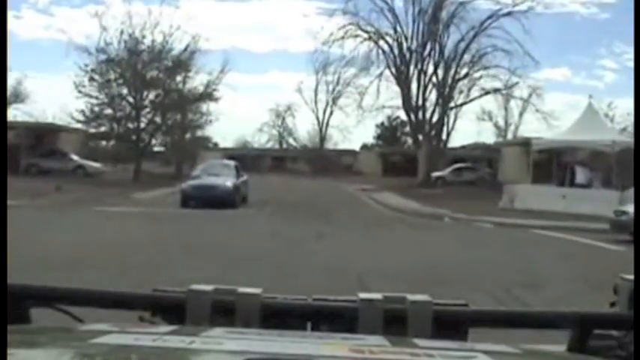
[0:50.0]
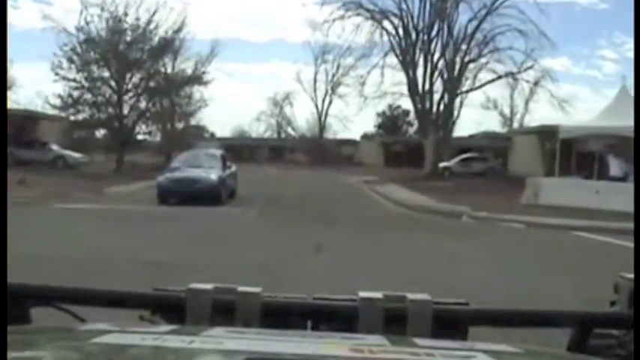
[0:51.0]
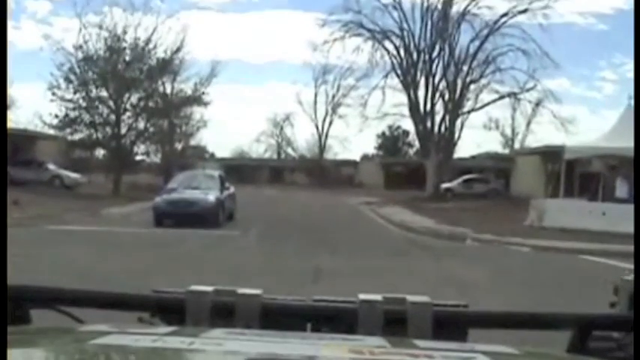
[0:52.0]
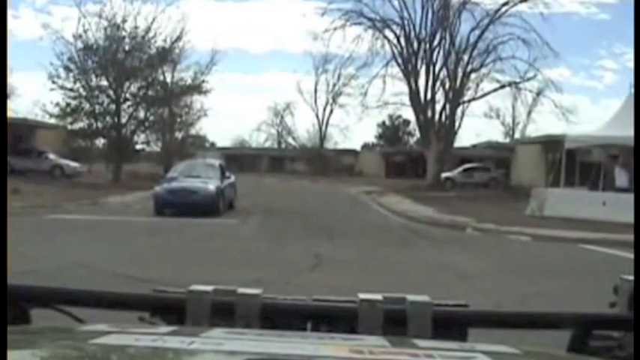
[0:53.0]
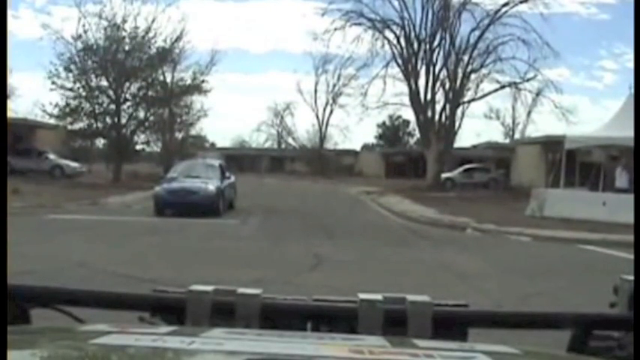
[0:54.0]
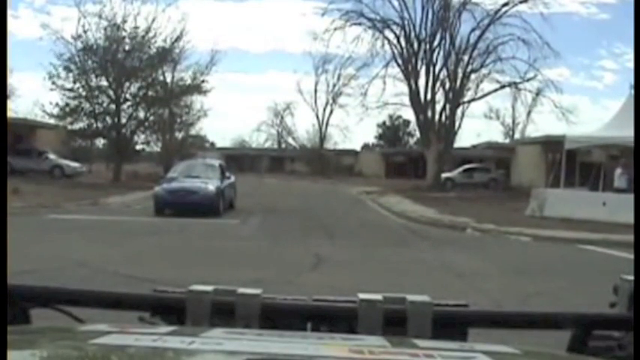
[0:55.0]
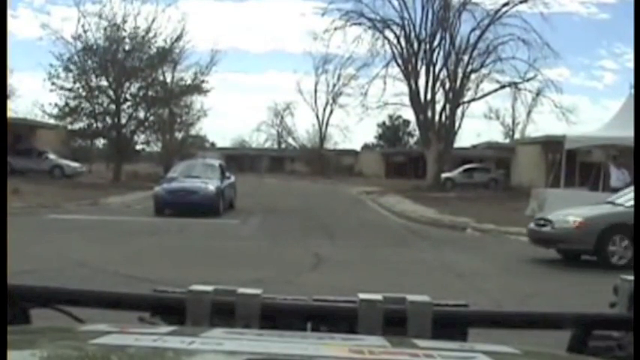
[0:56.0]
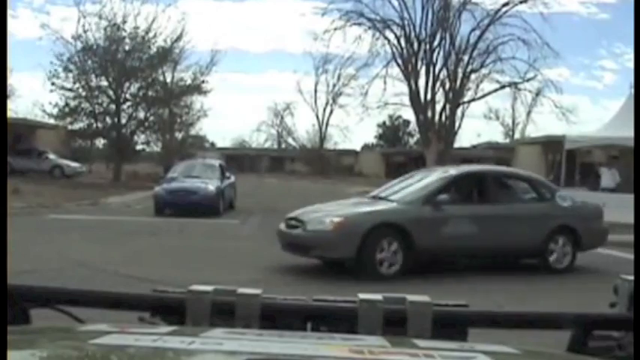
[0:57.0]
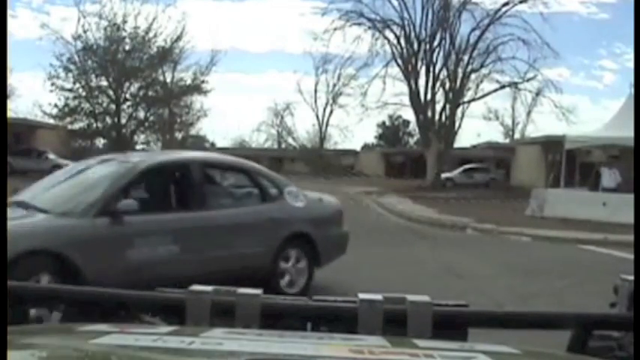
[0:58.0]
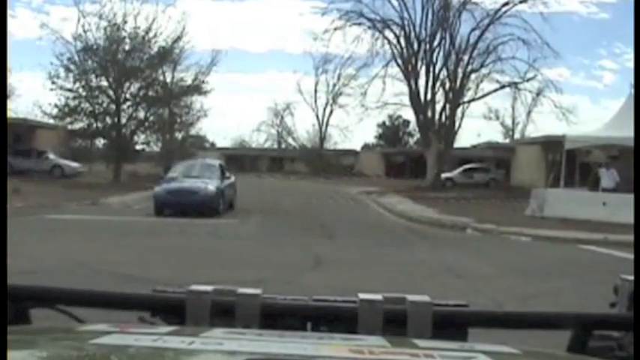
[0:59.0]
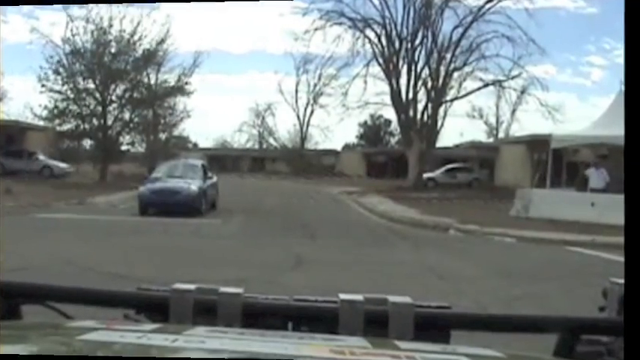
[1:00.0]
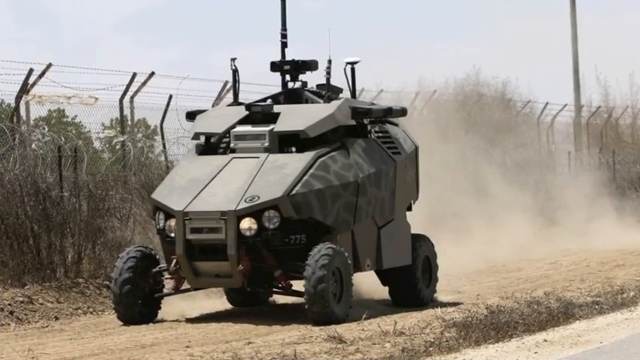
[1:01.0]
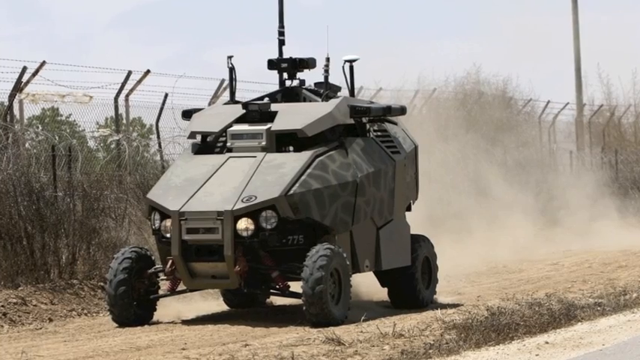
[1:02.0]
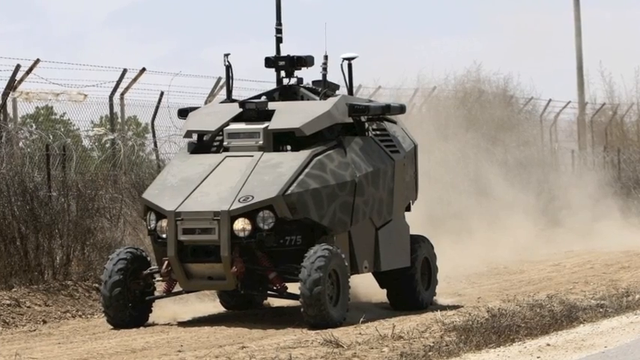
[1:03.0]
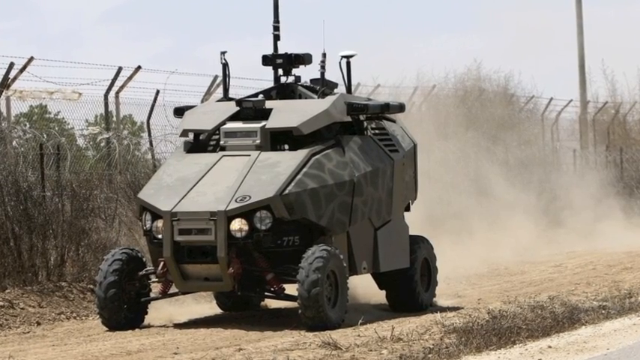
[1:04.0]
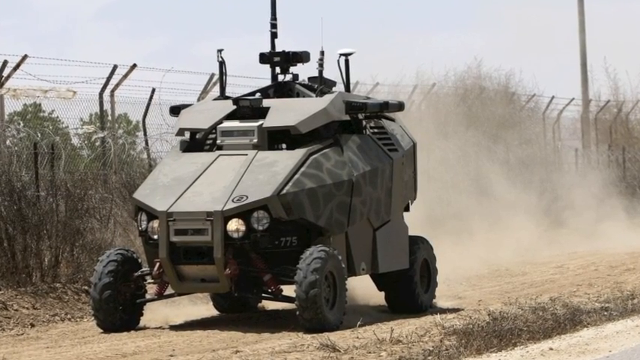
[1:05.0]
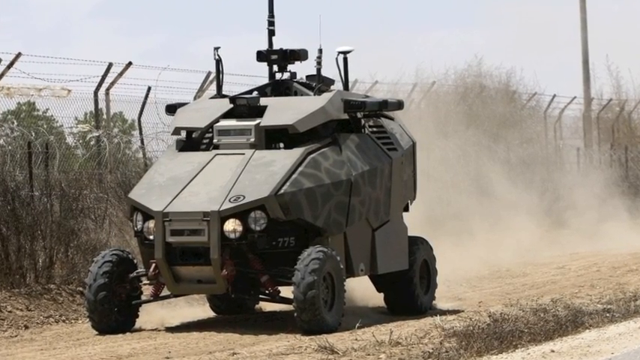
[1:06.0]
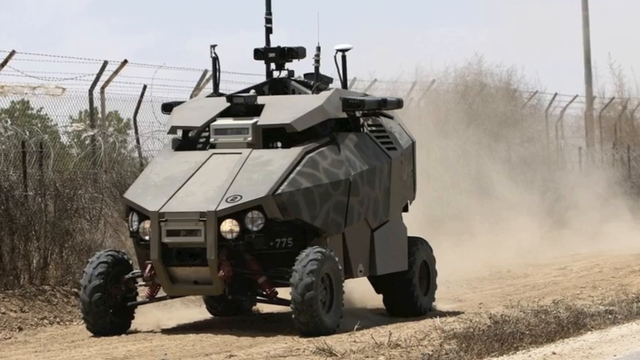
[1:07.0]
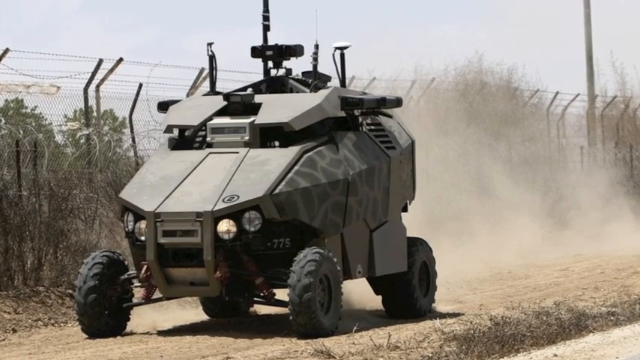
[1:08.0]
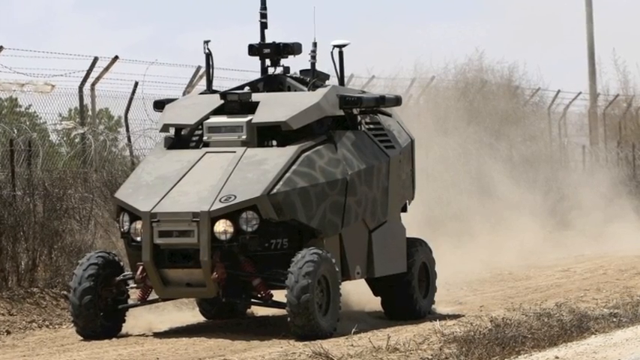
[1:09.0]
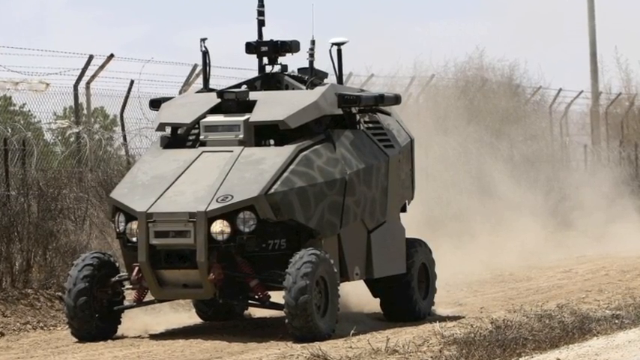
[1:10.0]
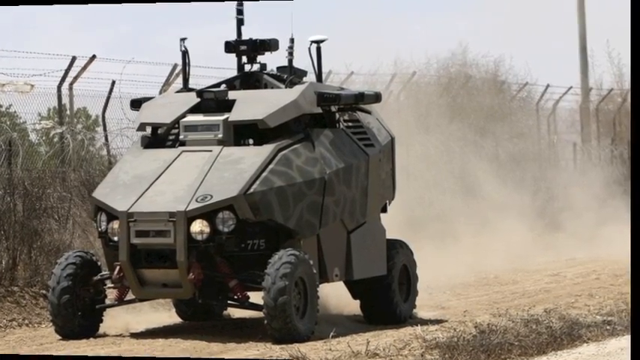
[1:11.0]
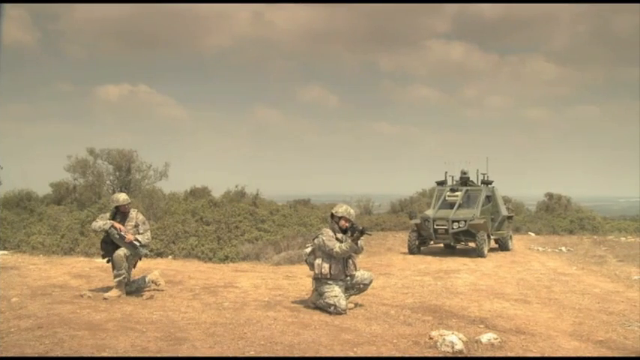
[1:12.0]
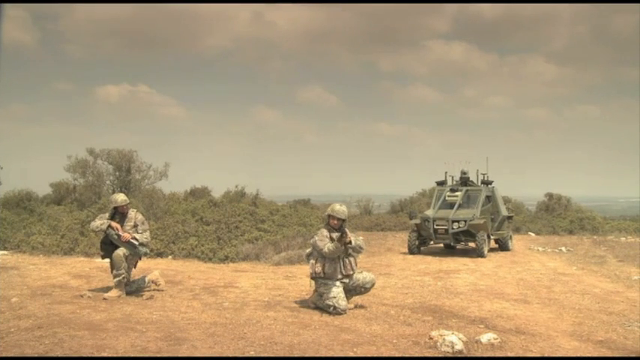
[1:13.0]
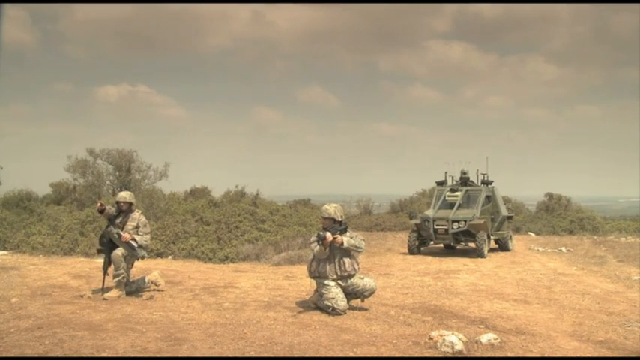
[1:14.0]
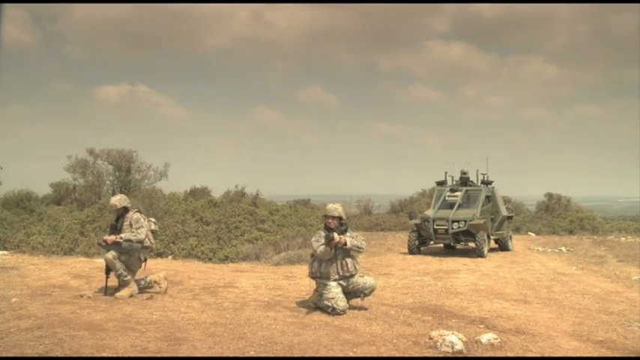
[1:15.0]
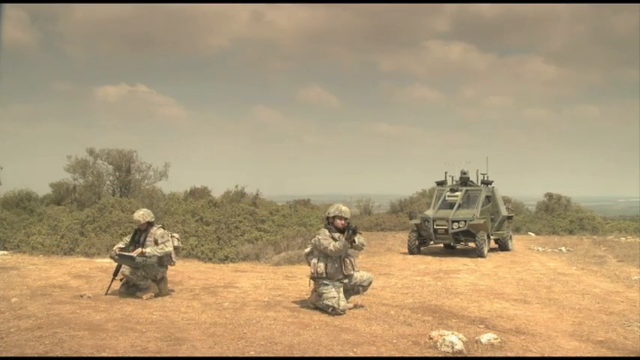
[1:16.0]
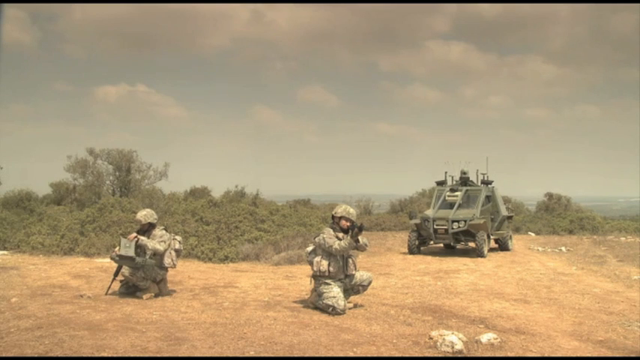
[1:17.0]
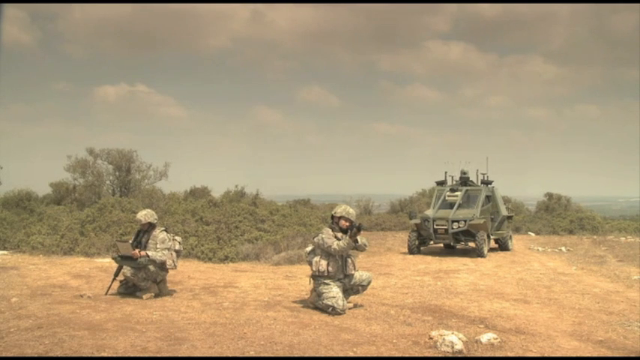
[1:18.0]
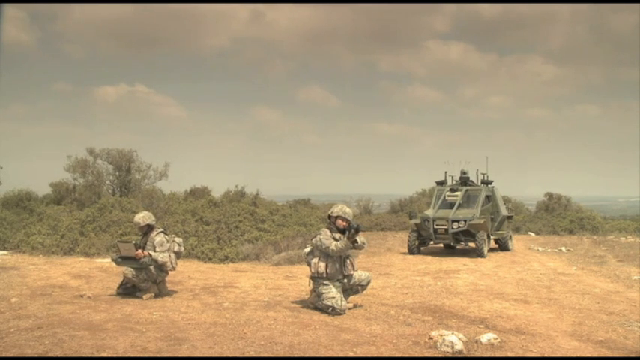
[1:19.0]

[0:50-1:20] The view is now a first-person perspective. In the background there are skinny trees, fewer than before; one of them is covered in leaves while the other is really exposed. Further back, behind these trees, are smaller versions of those trees, most of them exposed and not really covered in leaves. Three cars are in the scene: two white cars and one grayish, blackish car. There is also a tent for advertisements. The weather looks clear, with blue skies, white clouds, and a very bright look. The car from which the first-person view is seen seems to be crossing a road; the road looks very clean and the neighborhood looks very peaceful.